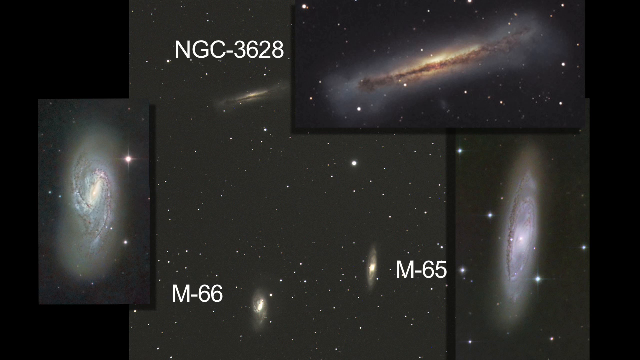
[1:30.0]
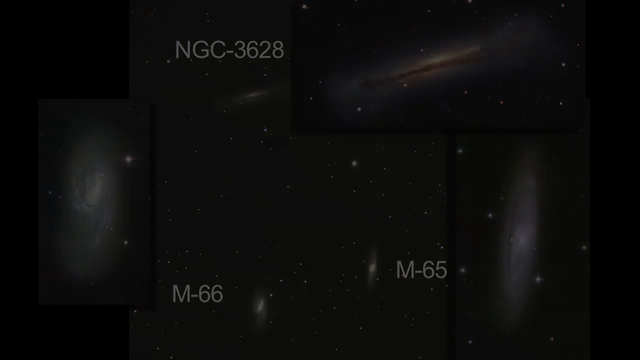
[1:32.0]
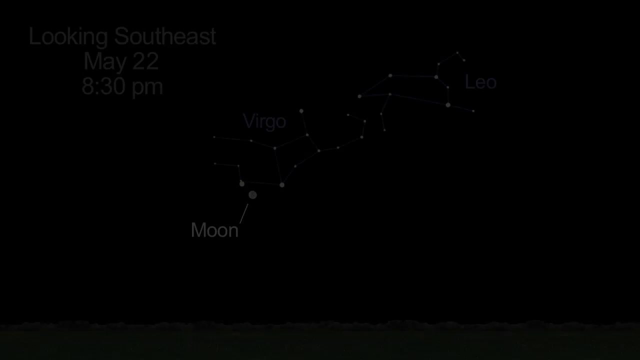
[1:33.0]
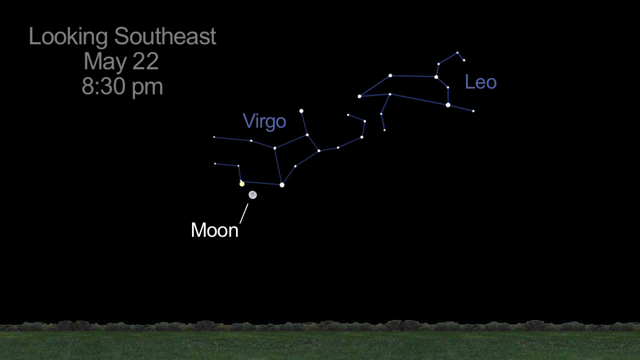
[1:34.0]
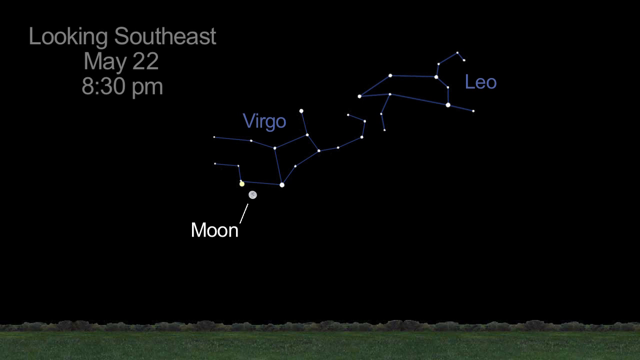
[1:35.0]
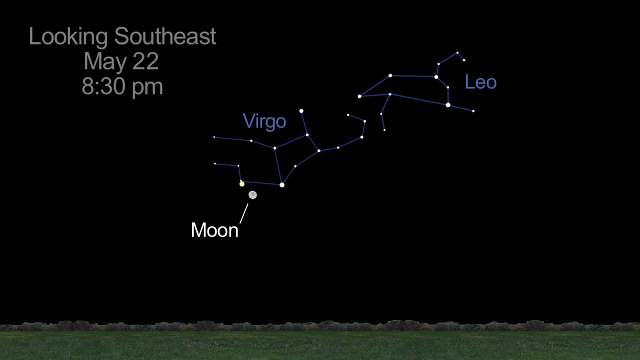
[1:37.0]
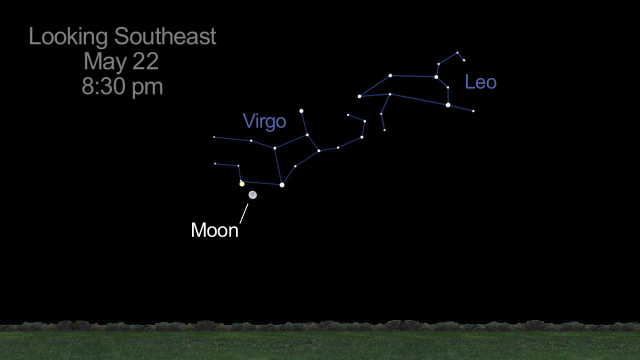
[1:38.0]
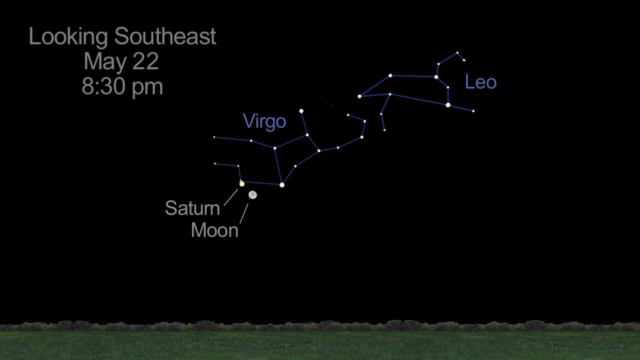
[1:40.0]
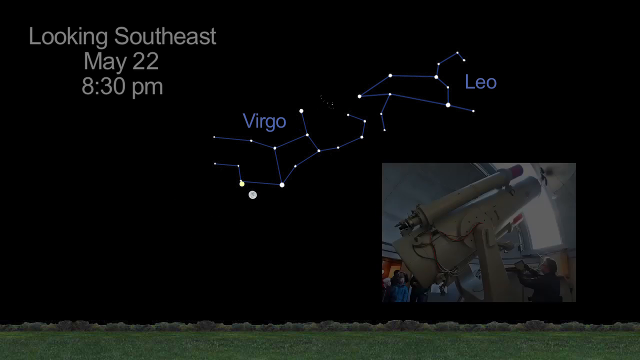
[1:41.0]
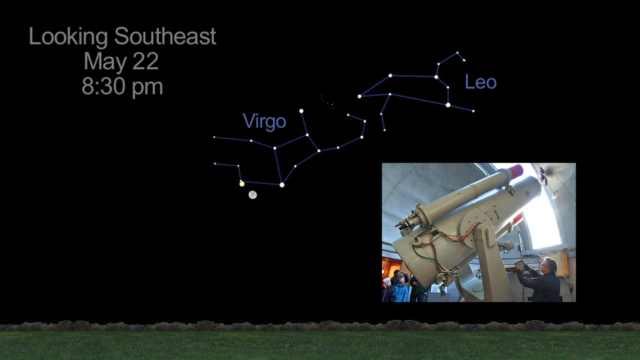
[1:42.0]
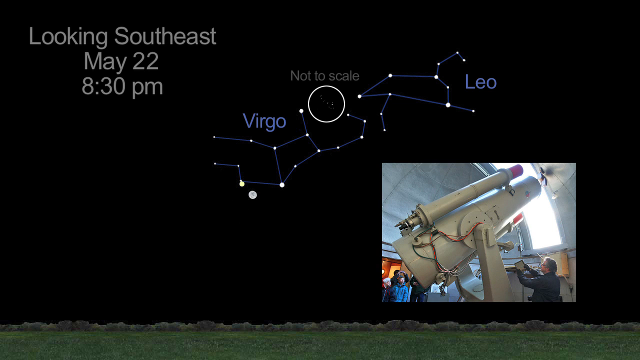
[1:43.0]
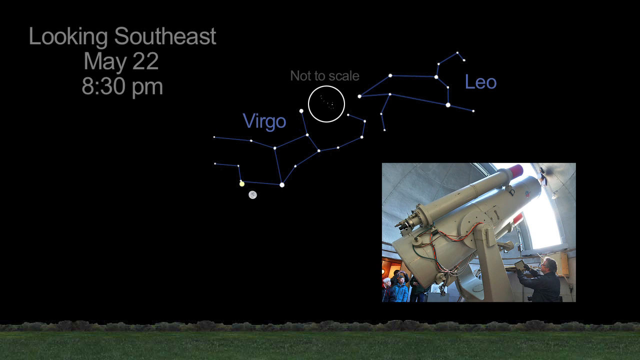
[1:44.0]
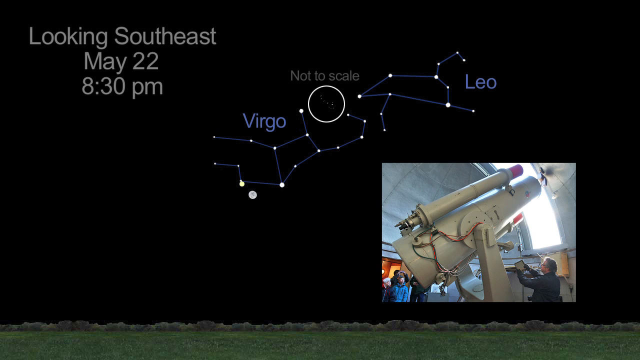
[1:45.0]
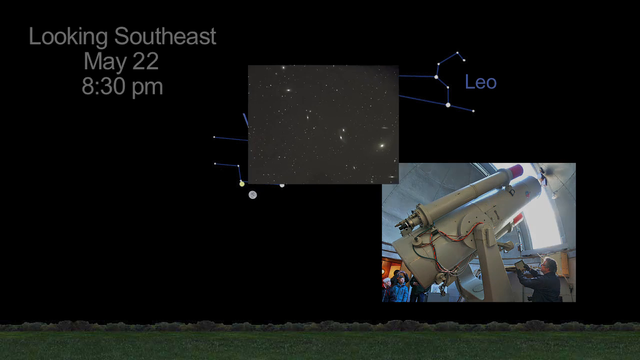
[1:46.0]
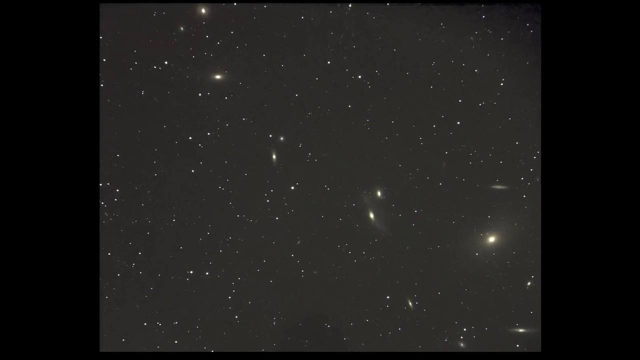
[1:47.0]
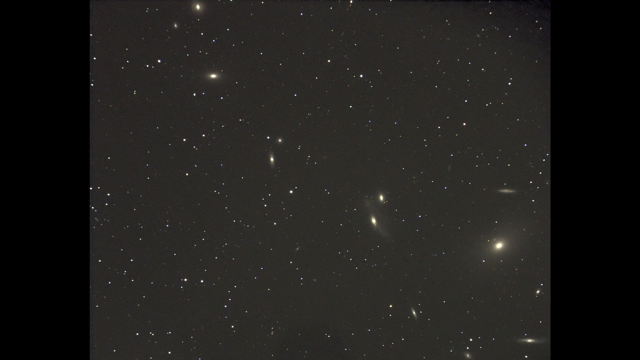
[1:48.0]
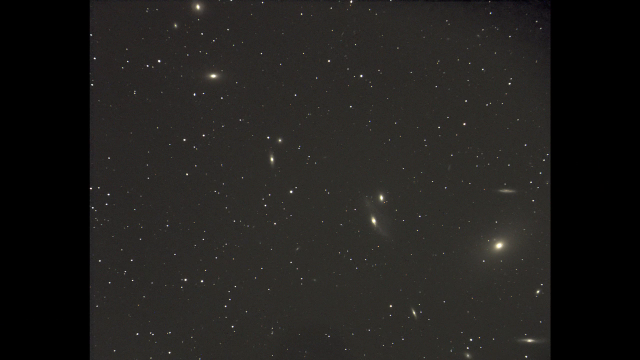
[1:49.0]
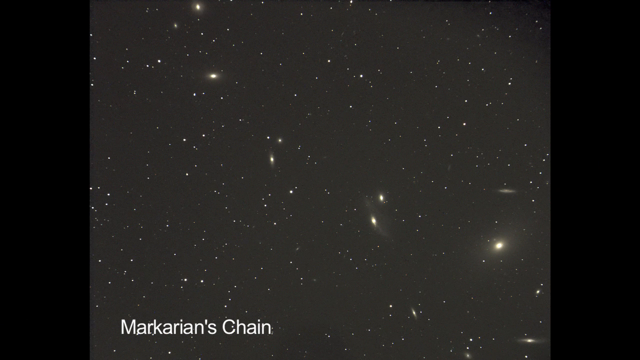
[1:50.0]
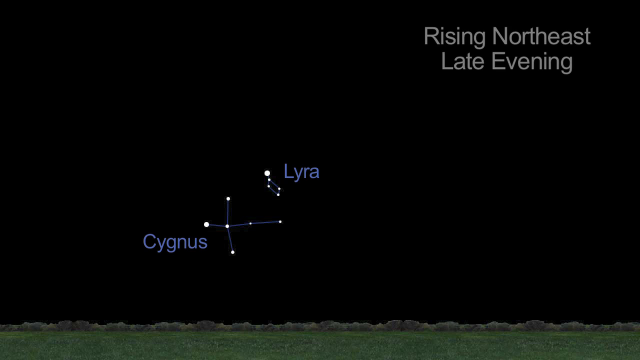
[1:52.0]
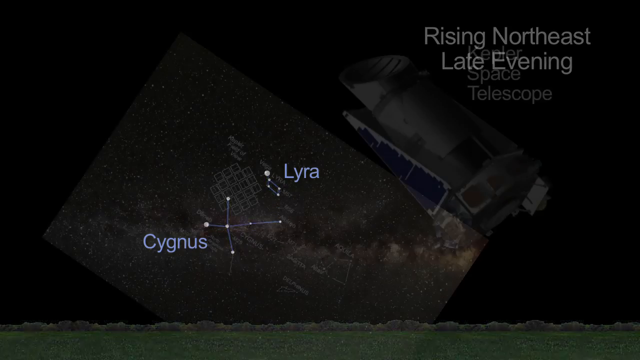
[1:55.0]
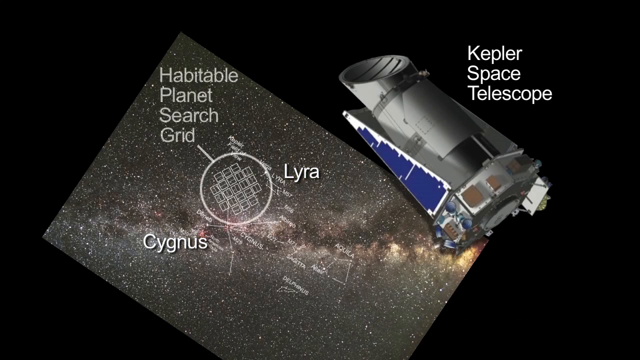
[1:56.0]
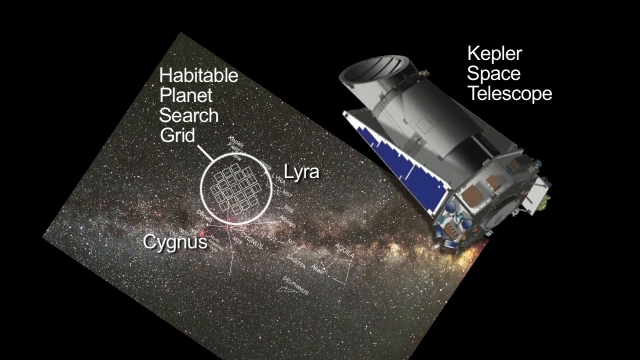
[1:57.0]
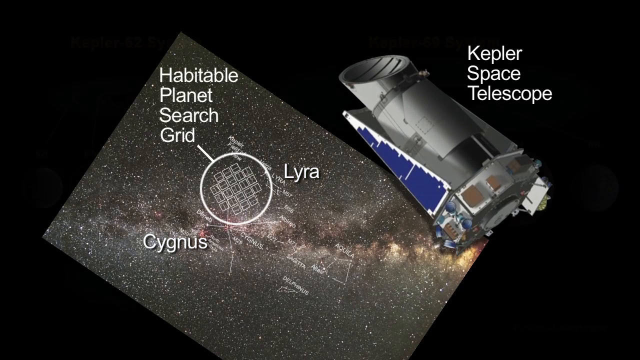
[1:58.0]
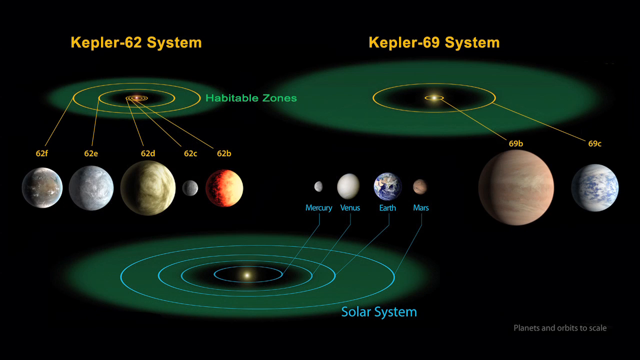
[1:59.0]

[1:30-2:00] Four images are displayed of what appear to be galaxies and stars. The top left is labeled "NGC-3628," the bottom left "M-66," and the bottom right "M-65." Two of the galaxies are shown from top down or bottom up, while the others appear to be seen from the side, showing only their skinny part. The video switches to a black background with the Virgo and Leo constellations illustrated in the center of the frame. A full moon is depicted below Virgo with the white text "moon" next to it. At the top left, text reads "Looking Southeast, May 22, 830 p.m."